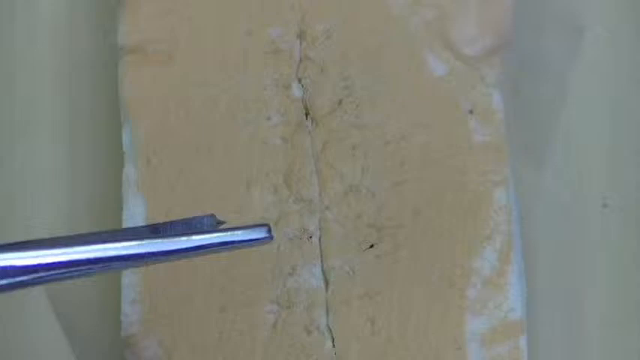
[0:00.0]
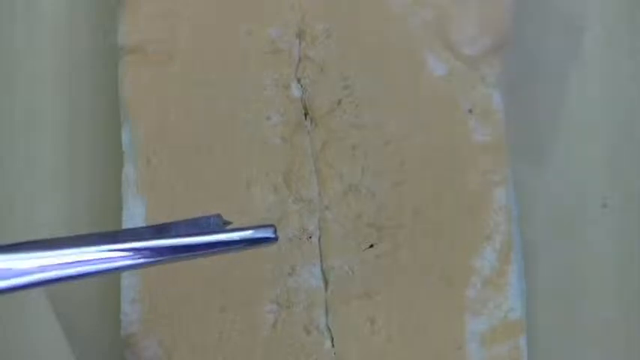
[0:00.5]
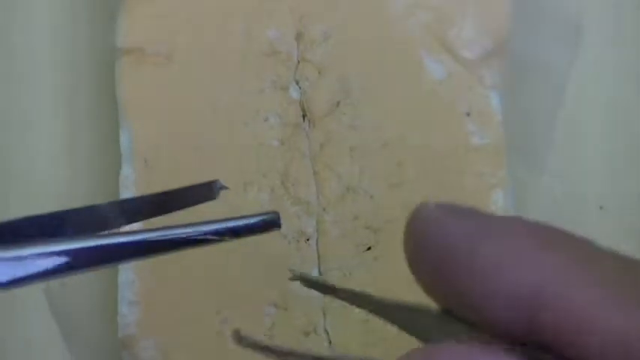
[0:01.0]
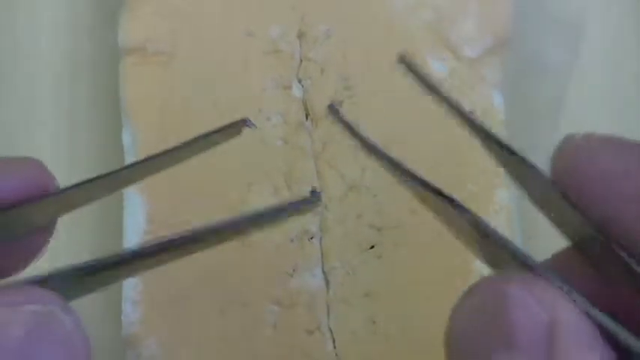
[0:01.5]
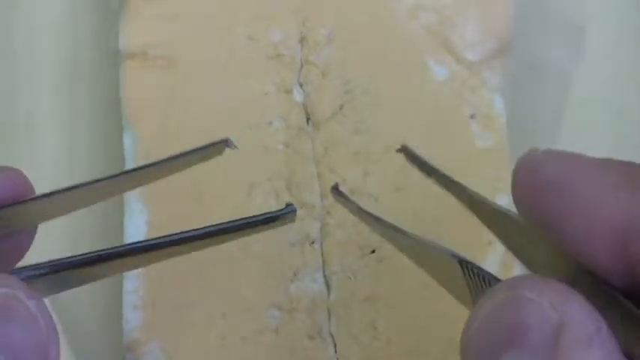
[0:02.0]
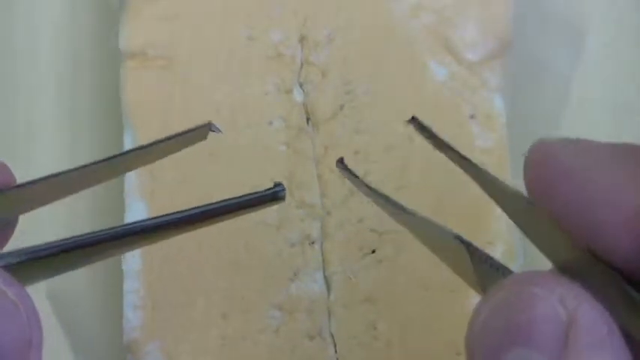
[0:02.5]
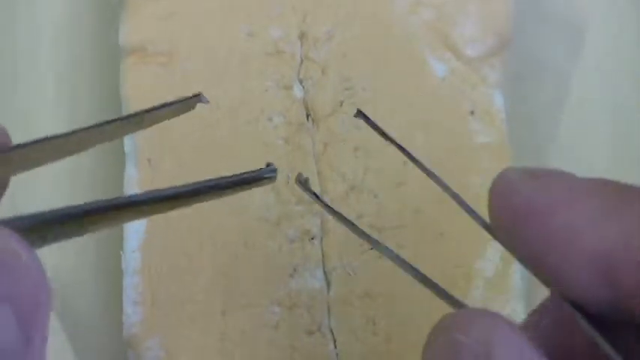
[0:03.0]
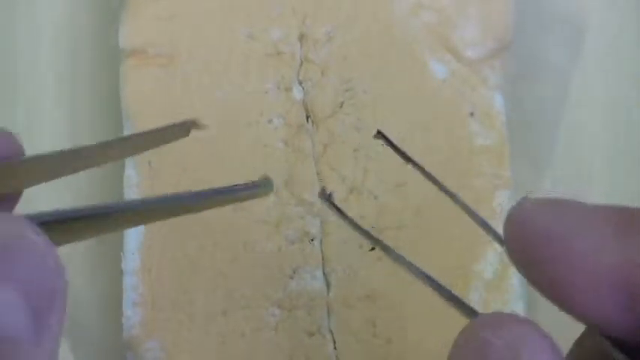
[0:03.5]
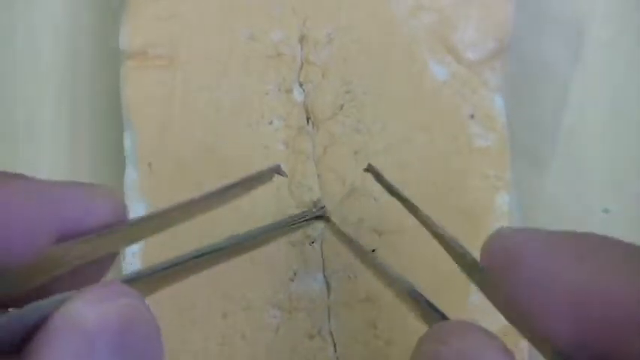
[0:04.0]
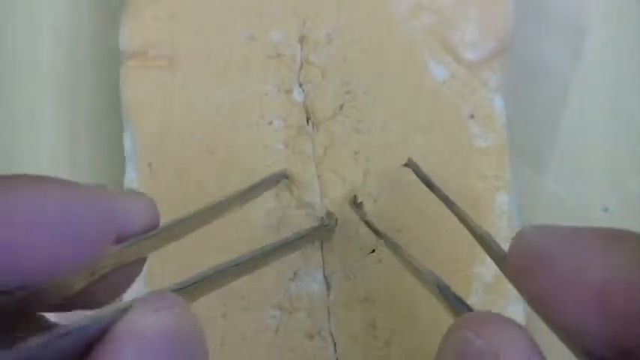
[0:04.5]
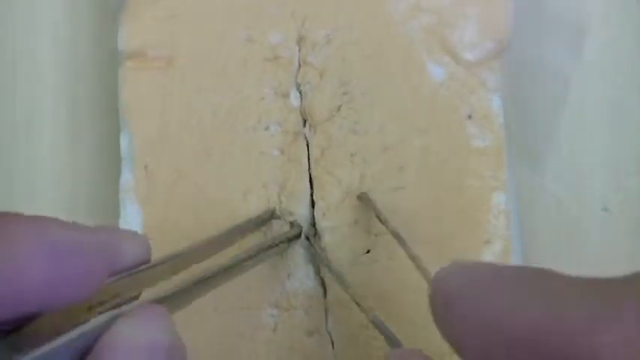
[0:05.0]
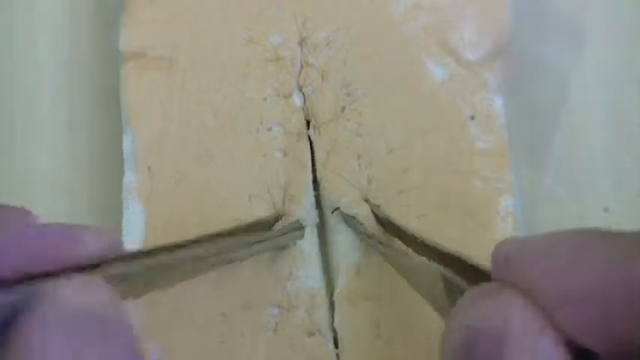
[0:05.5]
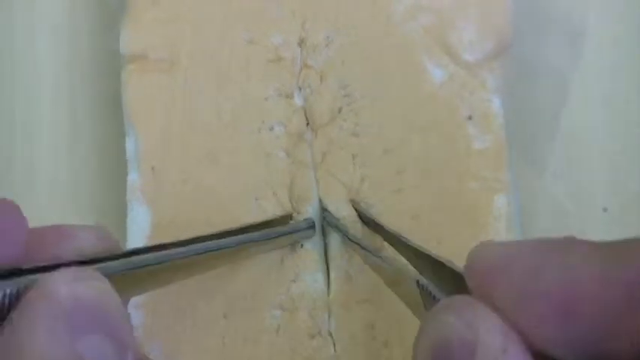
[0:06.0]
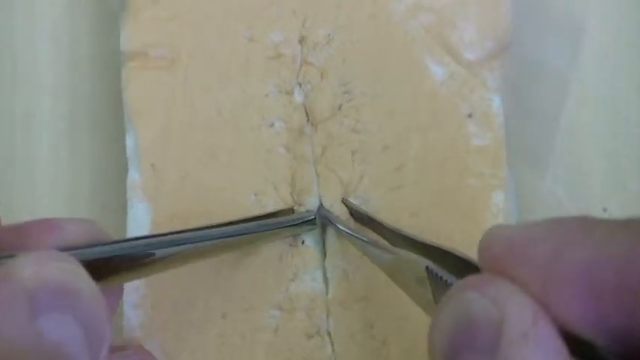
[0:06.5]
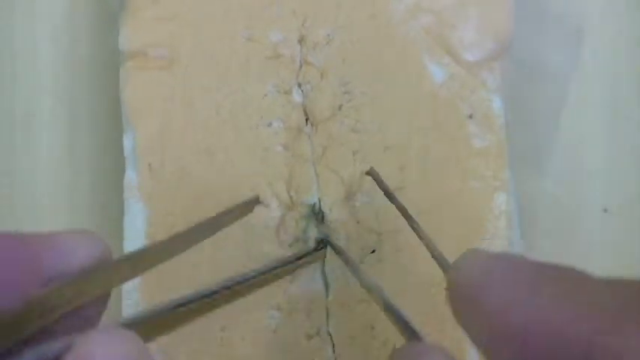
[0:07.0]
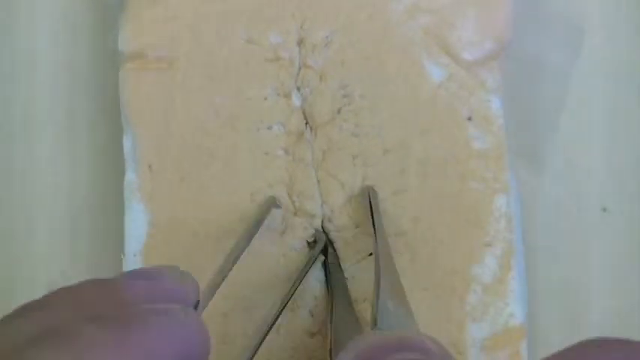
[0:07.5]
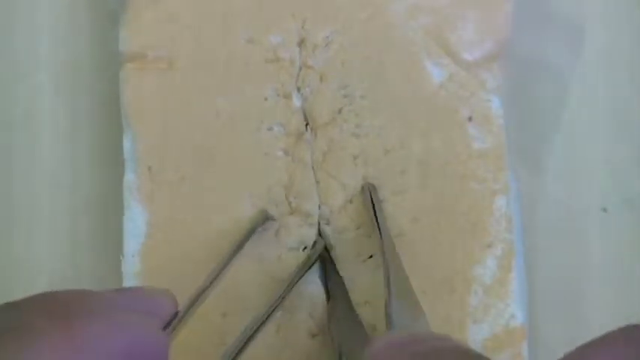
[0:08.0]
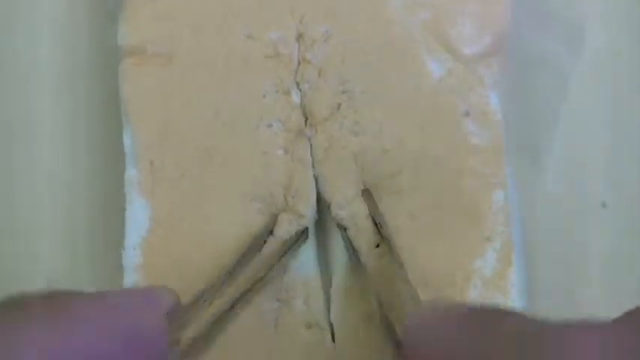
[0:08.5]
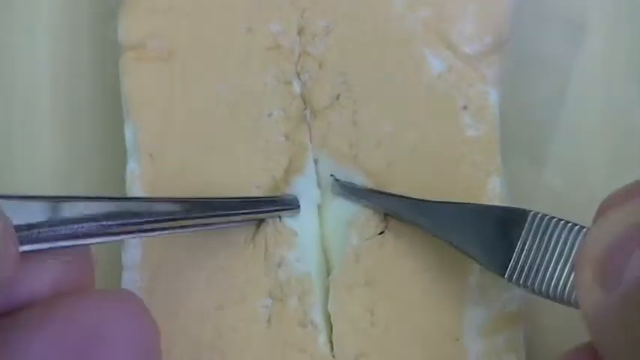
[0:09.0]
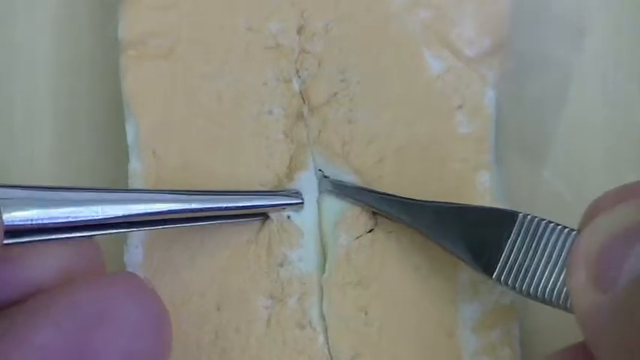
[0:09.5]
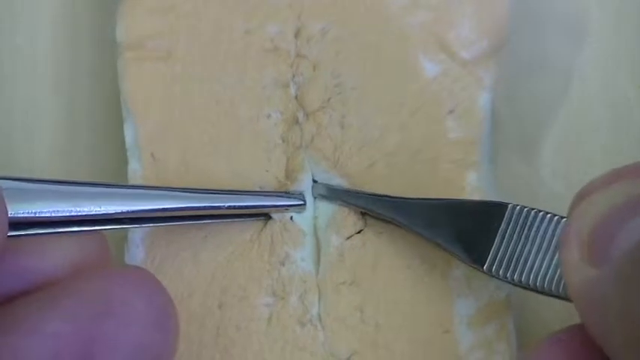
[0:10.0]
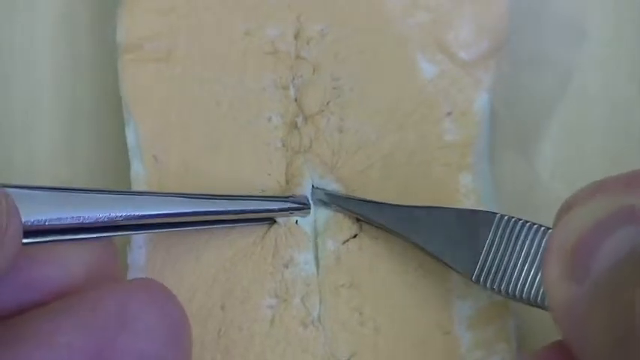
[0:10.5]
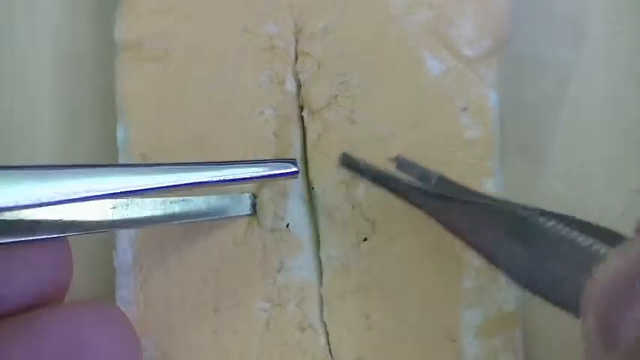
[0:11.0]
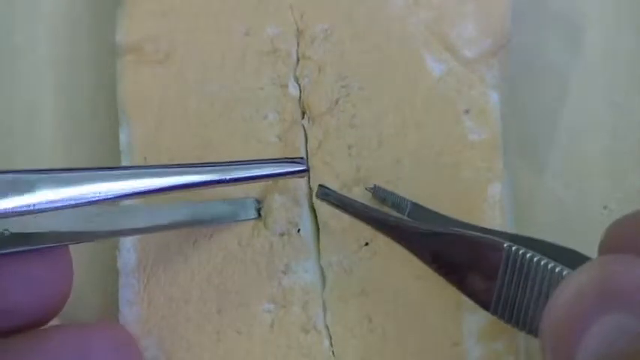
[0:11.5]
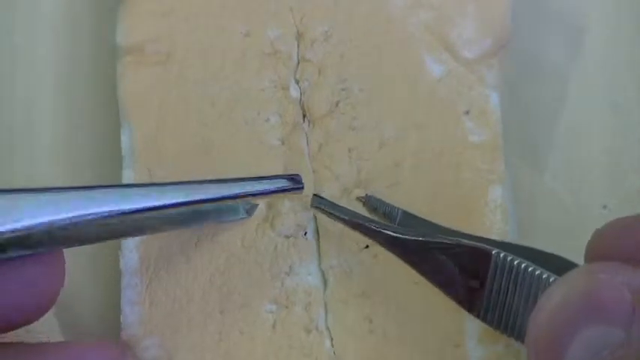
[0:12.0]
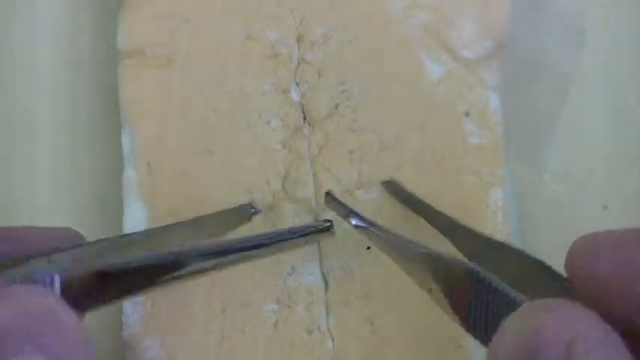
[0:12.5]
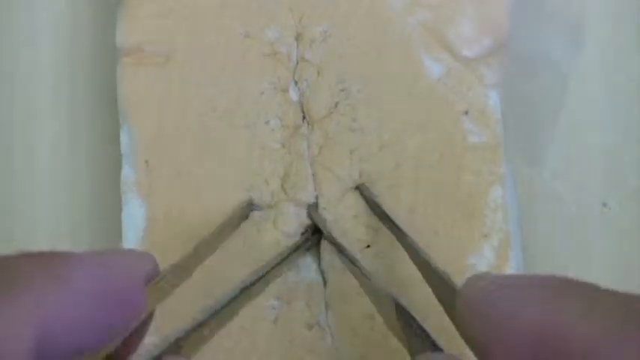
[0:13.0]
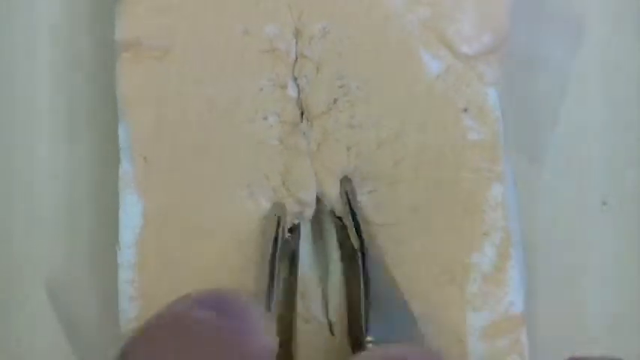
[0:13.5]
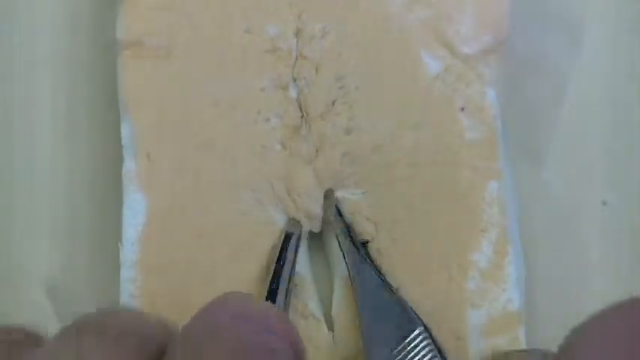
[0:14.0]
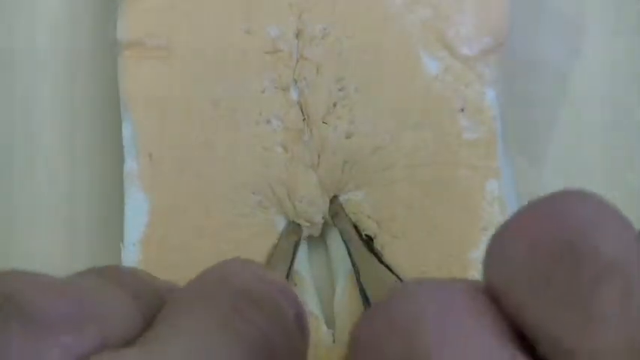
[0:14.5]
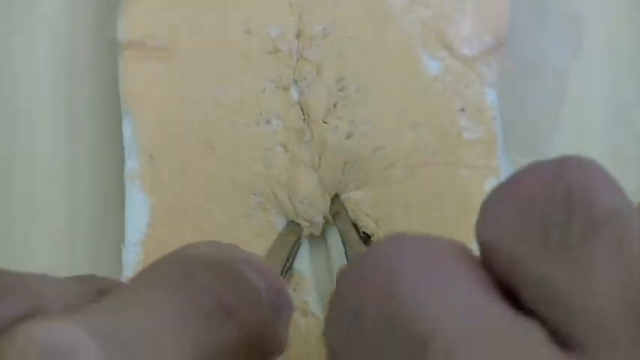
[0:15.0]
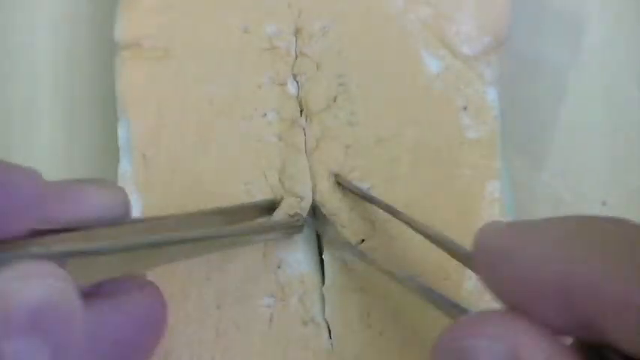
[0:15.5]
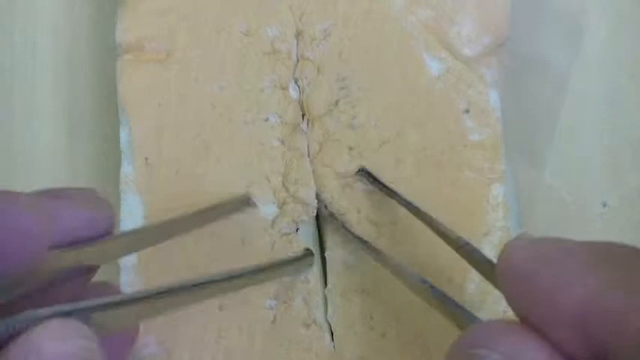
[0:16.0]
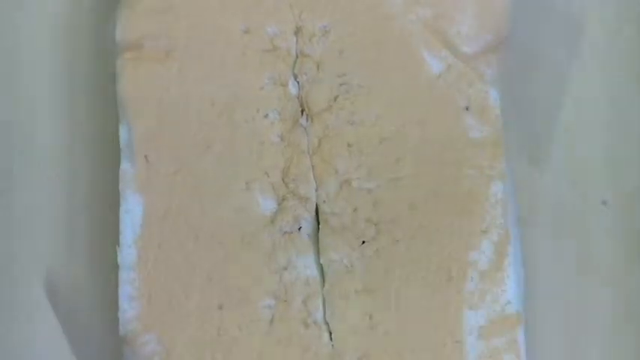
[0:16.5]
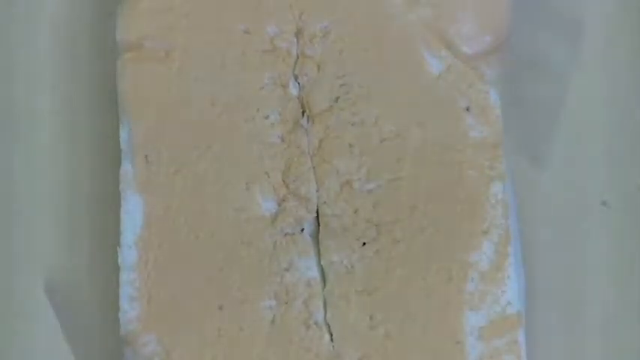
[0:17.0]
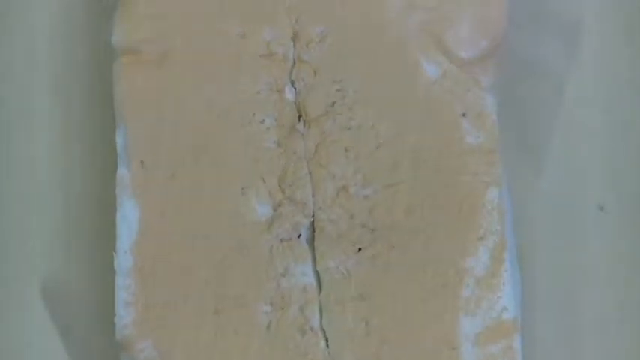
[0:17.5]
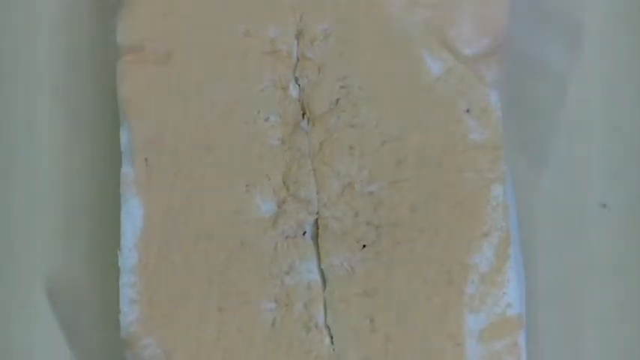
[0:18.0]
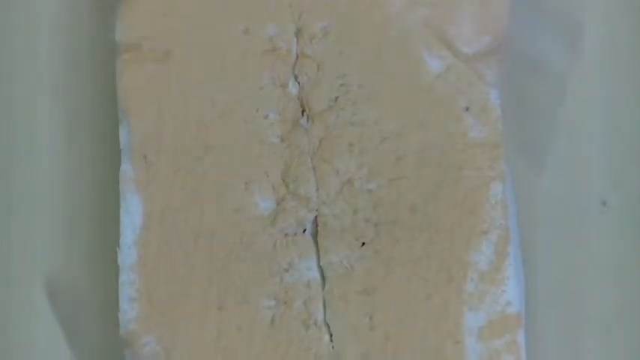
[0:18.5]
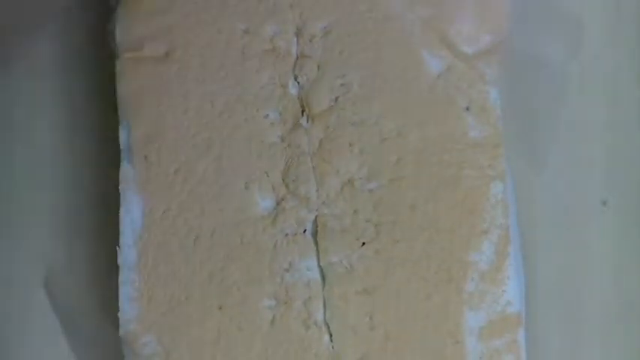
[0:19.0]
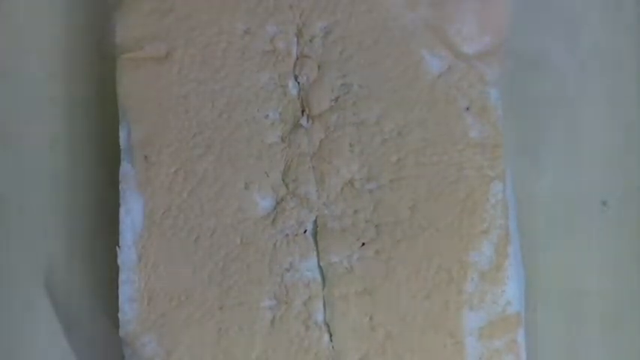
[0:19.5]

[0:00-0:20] A man, probably a facilitator teaching his viewers, works with an object that has a cut or gap running through it; it is unclear whether it is bread or foam, possibly a mattress-like material. He holds two pairs of forceps or tweezers and uses them to hold the two sides of the cut together, possibly to demonstrate something related to science or to stitching.